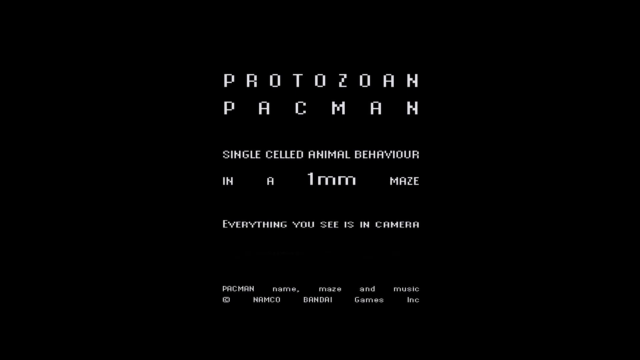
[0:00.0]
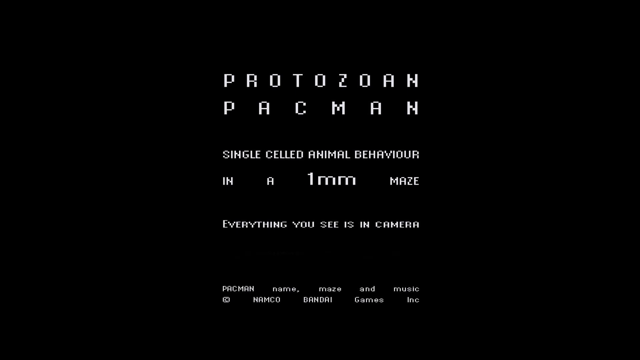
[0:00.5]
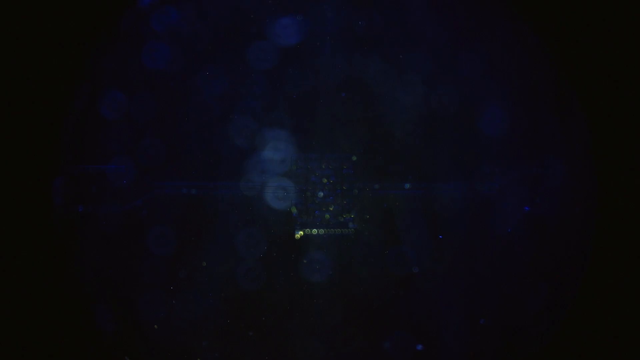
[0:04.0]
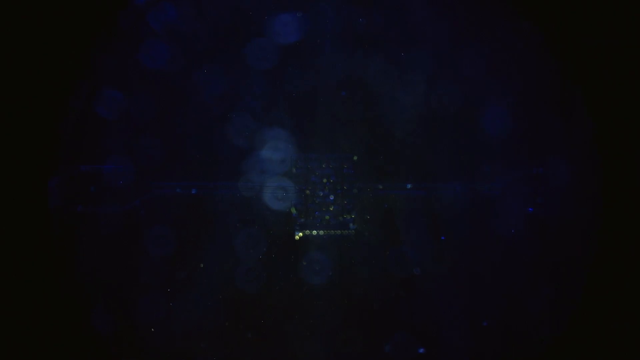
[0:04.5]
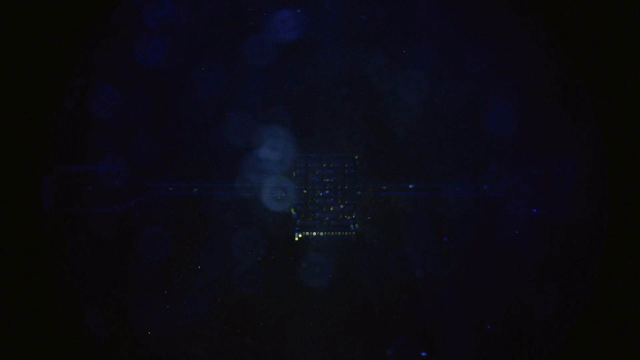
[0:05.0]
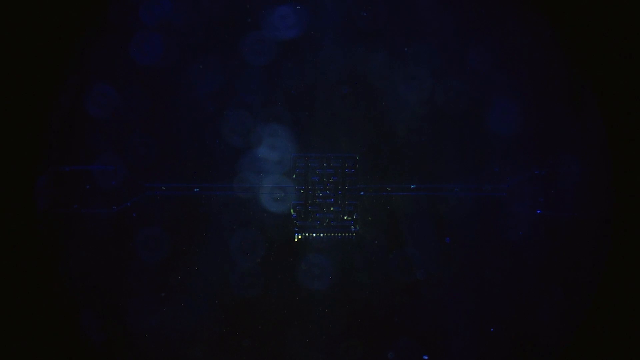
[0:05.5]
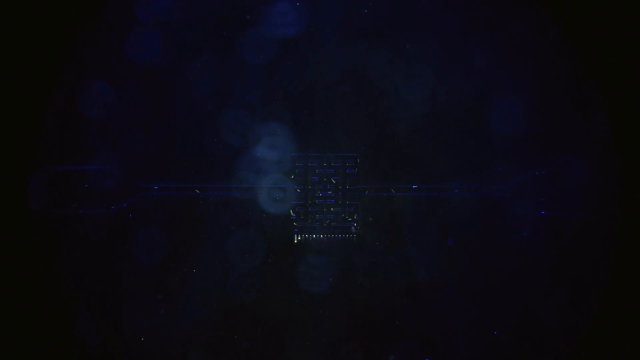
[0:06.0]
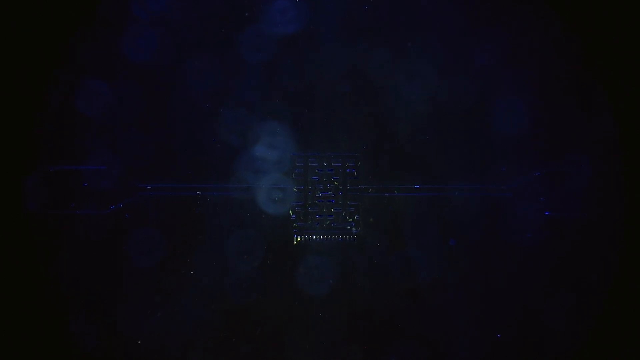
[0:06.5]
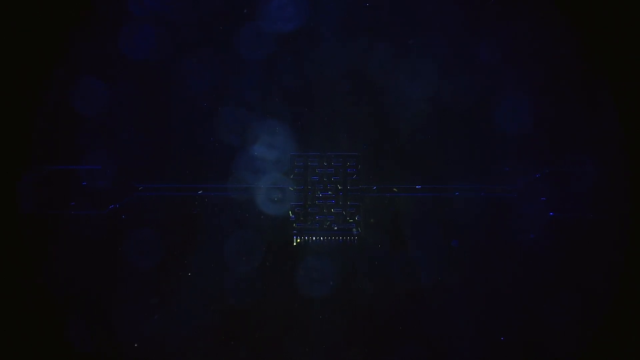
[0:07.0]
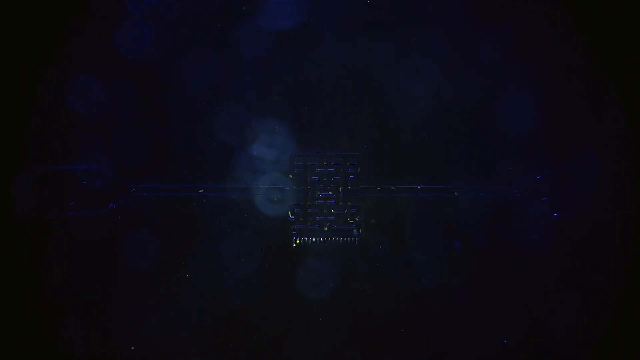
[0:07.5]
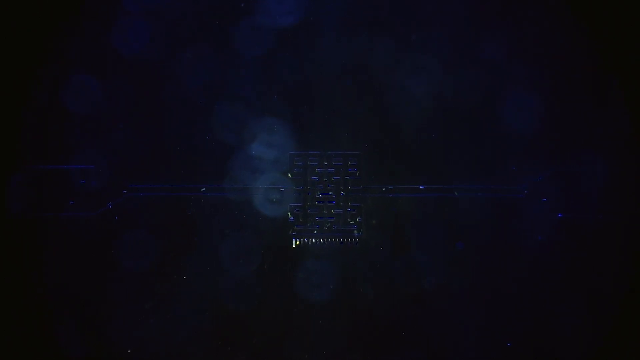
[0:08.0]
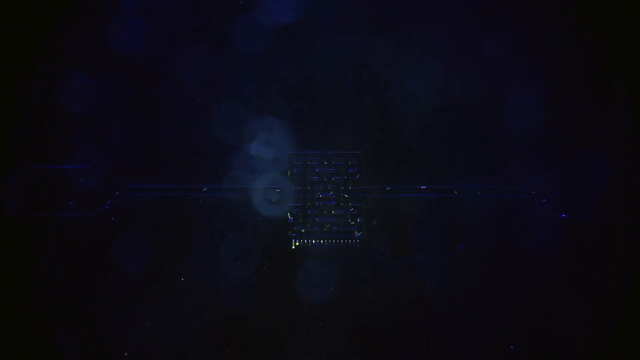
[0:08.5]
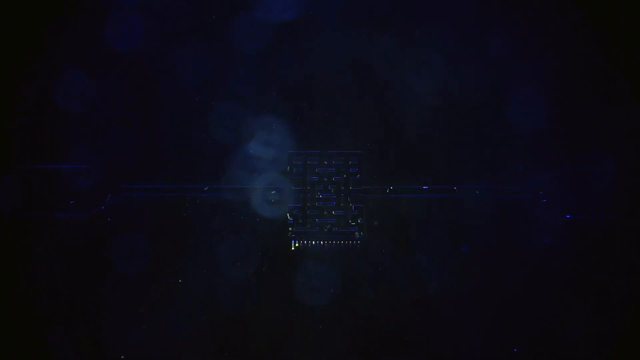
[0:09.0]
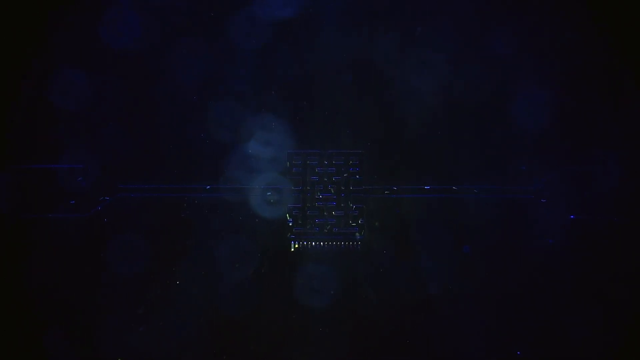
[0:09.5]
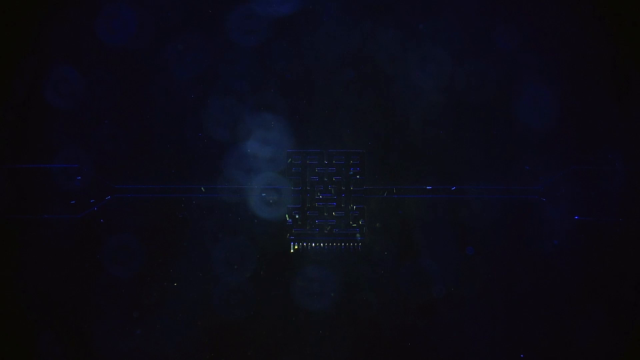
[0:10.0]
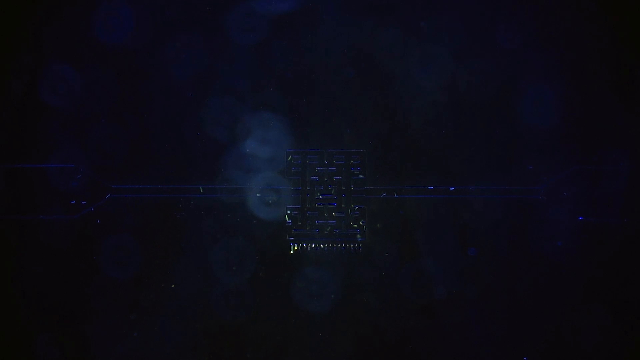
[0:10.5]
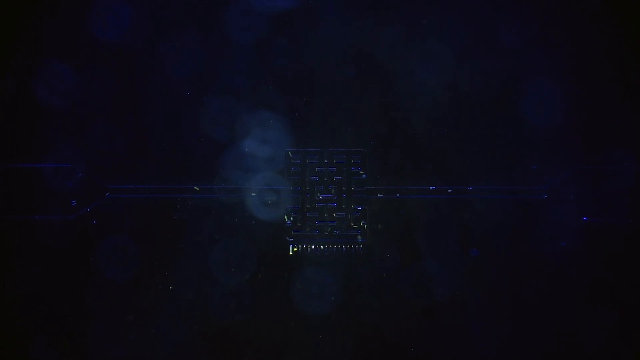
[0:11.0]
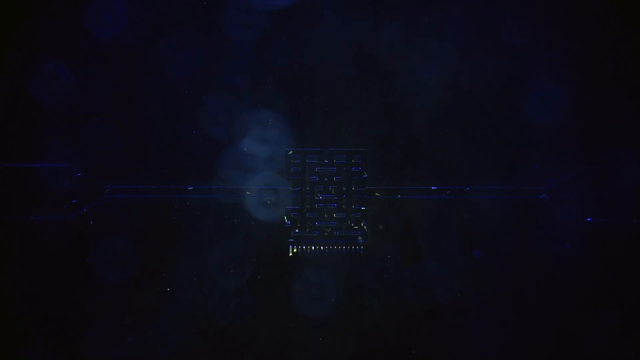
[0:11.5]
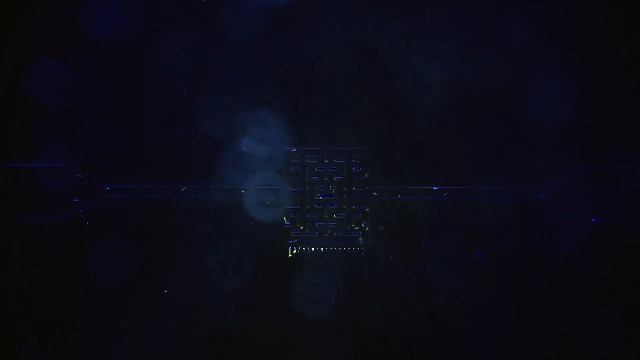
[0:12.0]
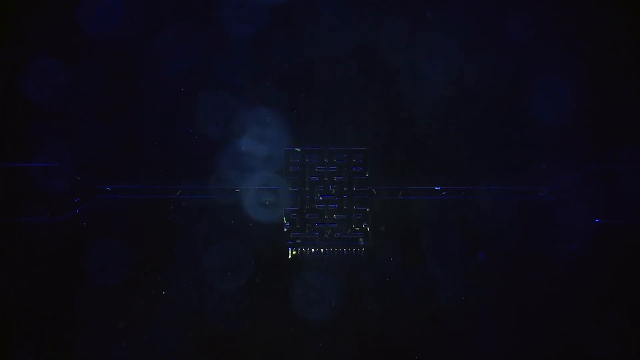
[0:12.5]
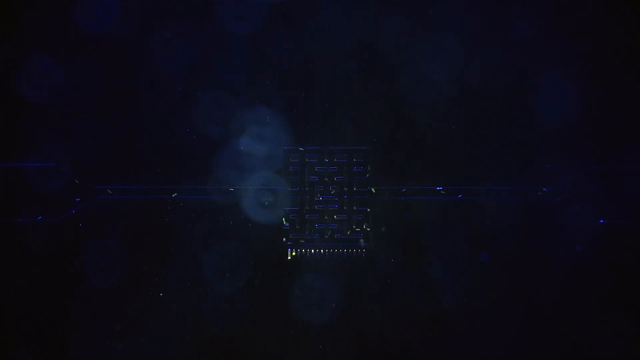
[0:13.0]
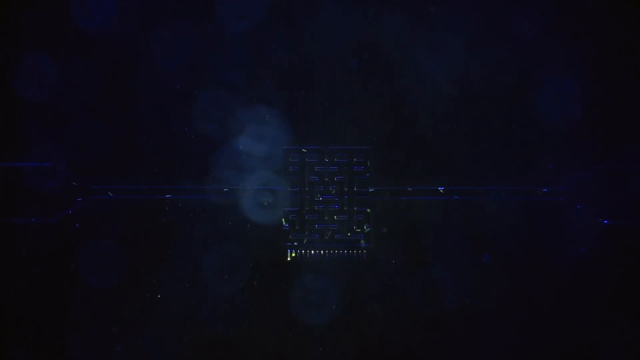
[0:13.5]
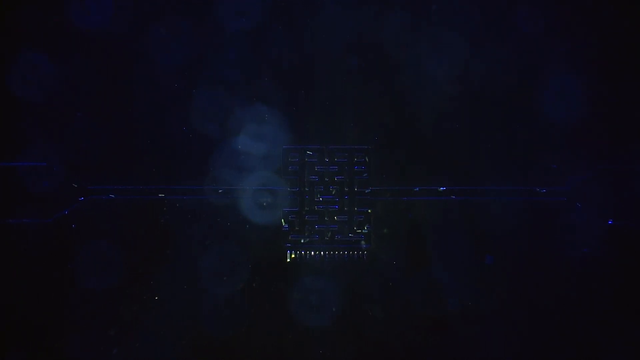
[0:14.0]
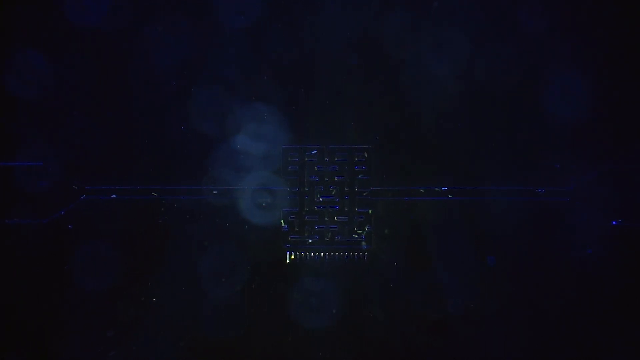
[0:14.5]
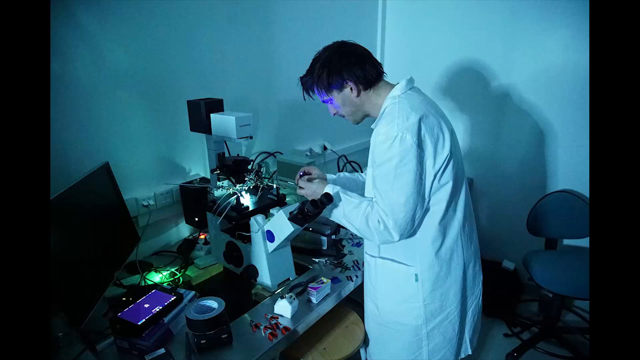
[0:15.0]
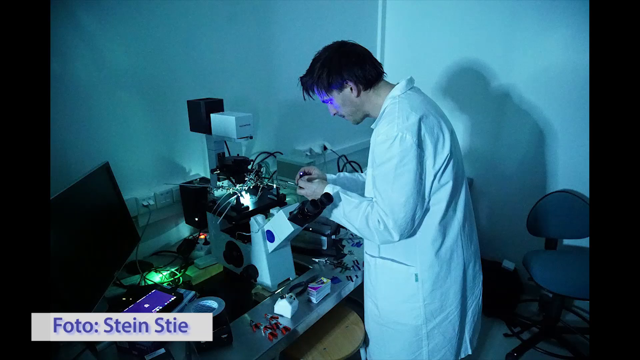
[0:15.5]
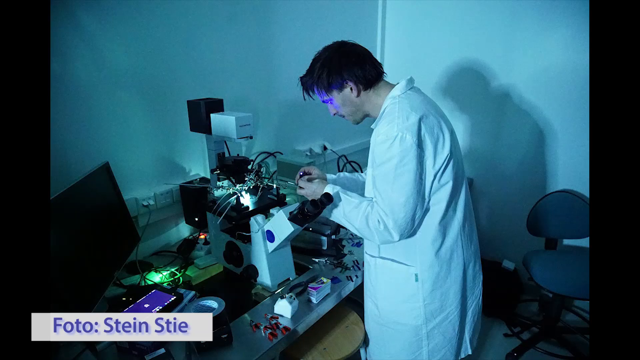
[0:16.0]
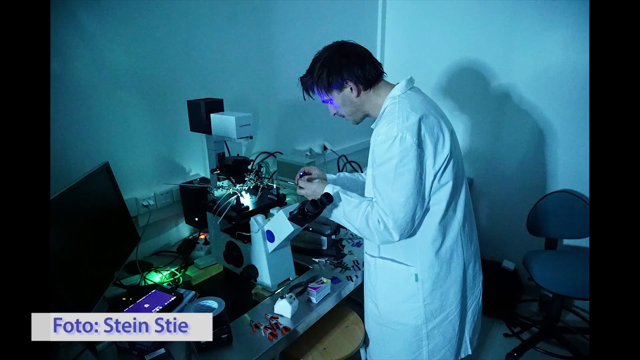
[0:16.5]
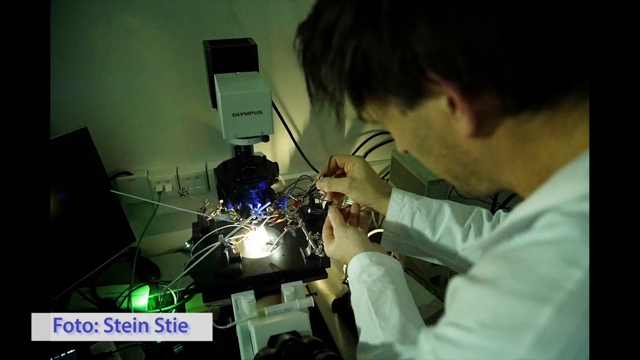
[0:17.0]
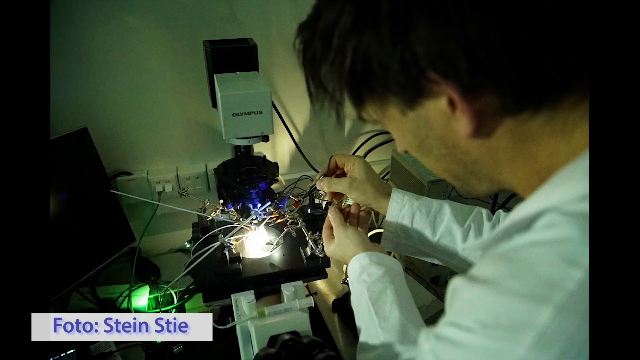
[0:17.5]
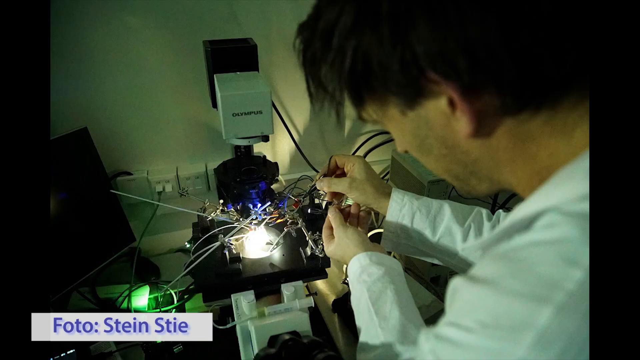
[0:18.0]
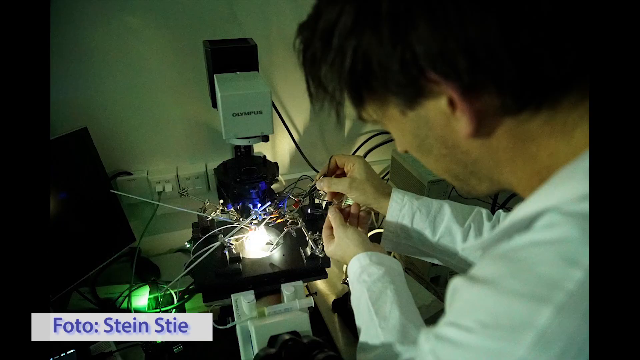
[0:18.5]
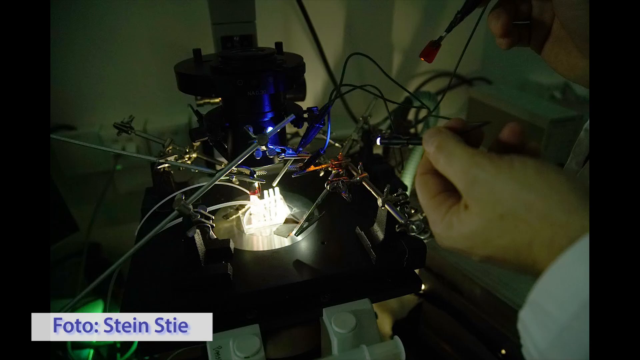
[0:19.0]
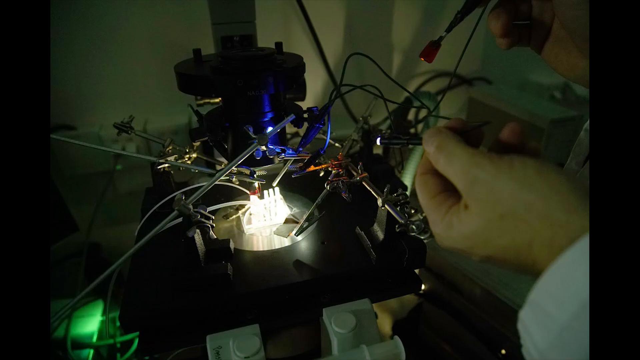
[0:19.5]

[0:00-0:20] The video opens on a black screen with white text in a pixelated font; at the top it reads "Protozoan Pac-Man". It then transitions to a series of multicolored shapes in the far distance on a black background, with reflective white on the screen. There are yellow or orange dots, and there appears to be a rectangular structure in the middle with two long corridors running off to the left and right edges of the screen. The view slowly zooms in on this center structure. Next comes a scientist in a laboratory, bending forward slightly and reaching forward with both hands to interact with a series of intertwined wires. A different image shows the same scientist in roughly the same pose, in a more zoomed-in, over-the-shoulder view, followed by another image of the same scenario, close up on the wires.